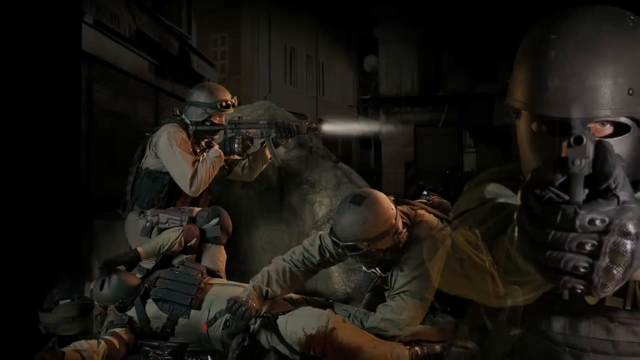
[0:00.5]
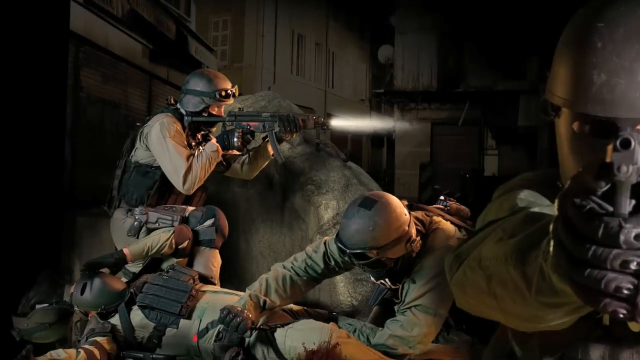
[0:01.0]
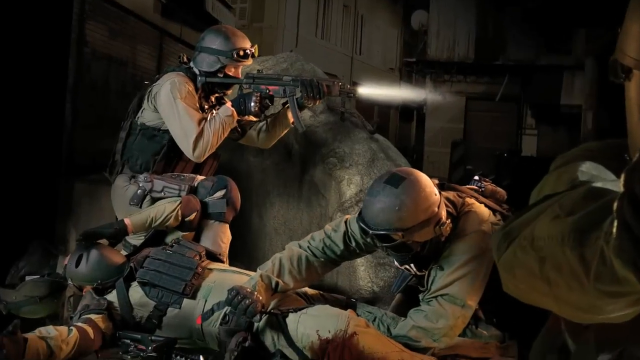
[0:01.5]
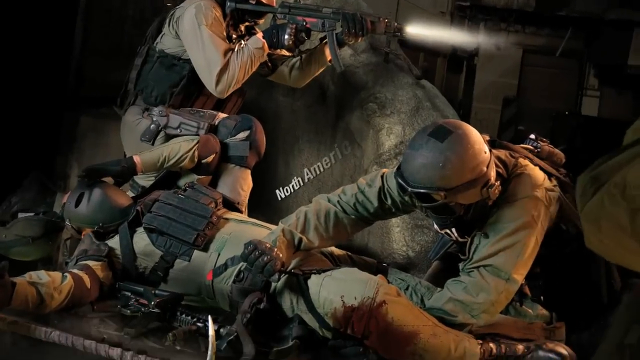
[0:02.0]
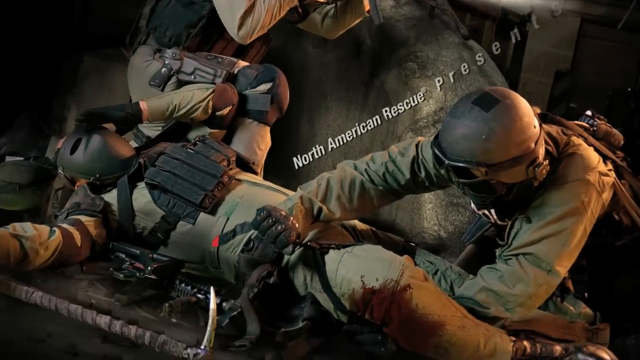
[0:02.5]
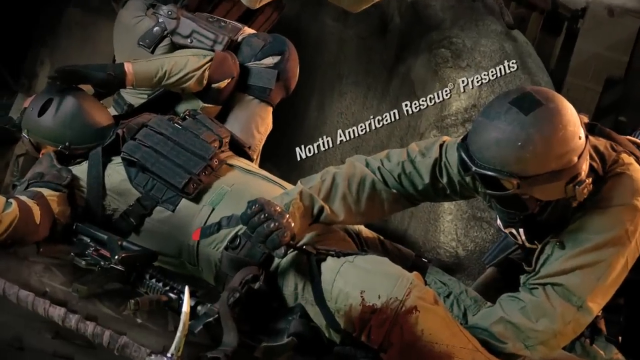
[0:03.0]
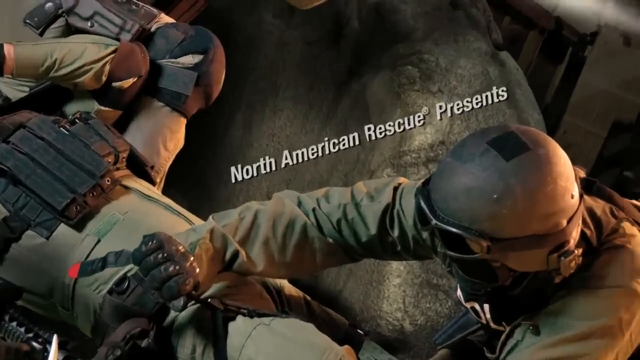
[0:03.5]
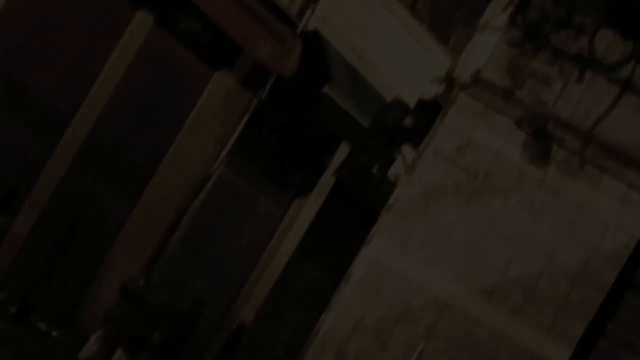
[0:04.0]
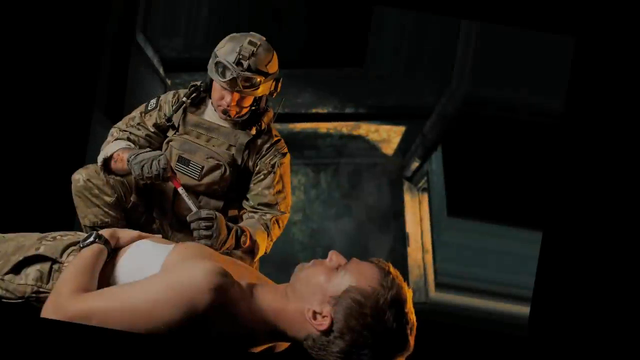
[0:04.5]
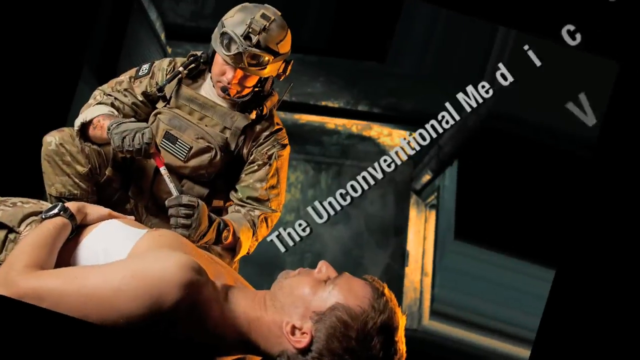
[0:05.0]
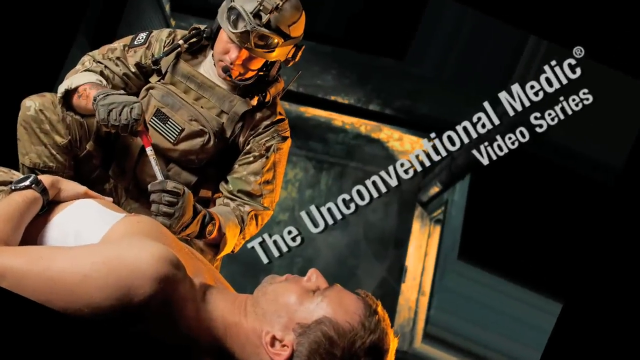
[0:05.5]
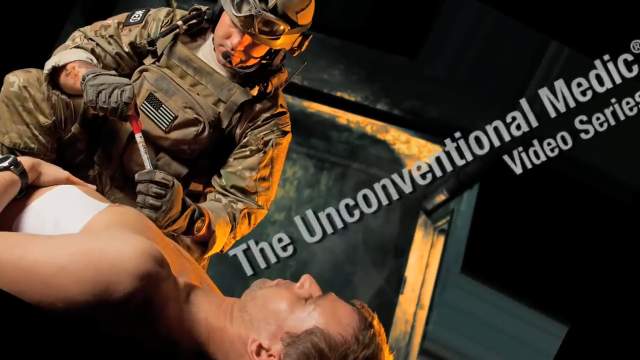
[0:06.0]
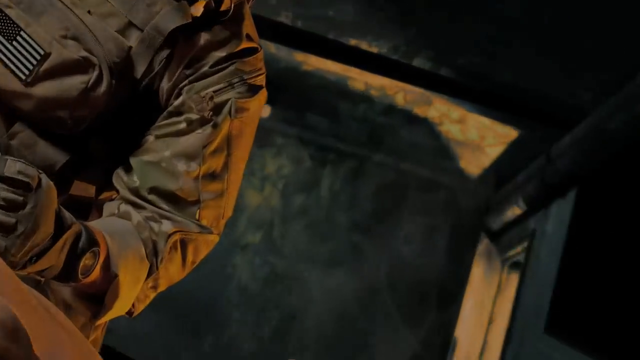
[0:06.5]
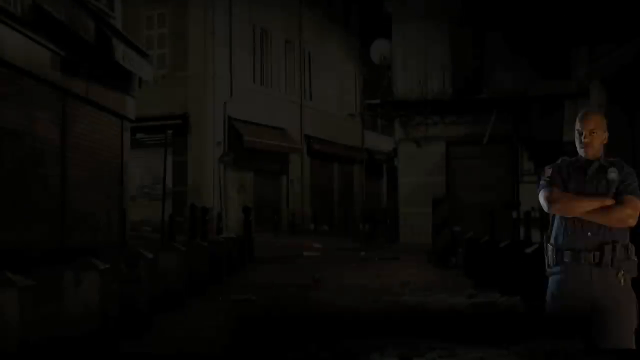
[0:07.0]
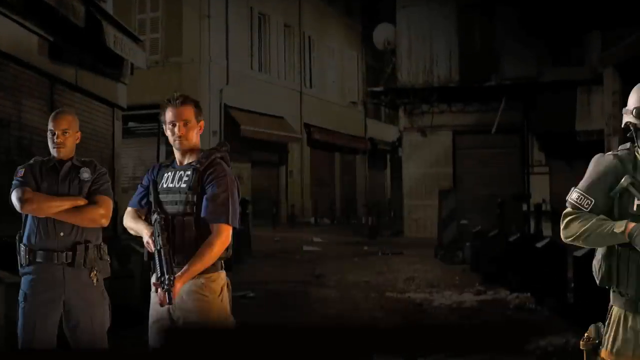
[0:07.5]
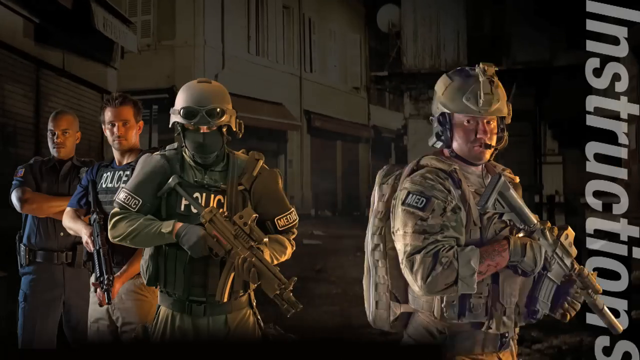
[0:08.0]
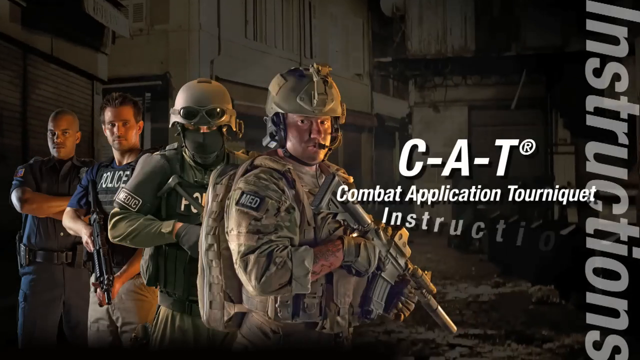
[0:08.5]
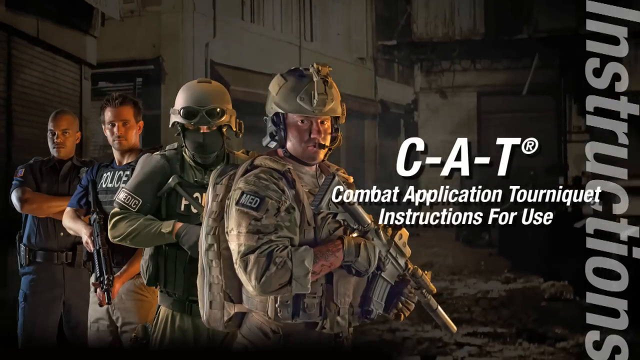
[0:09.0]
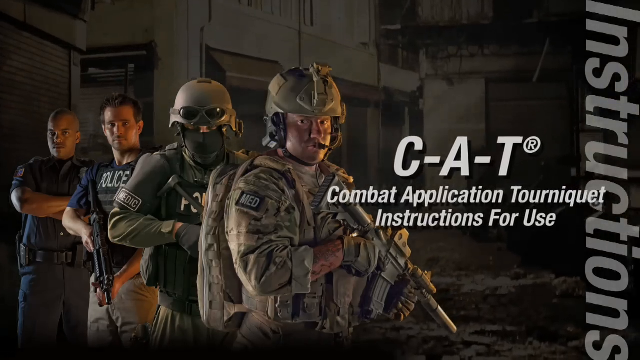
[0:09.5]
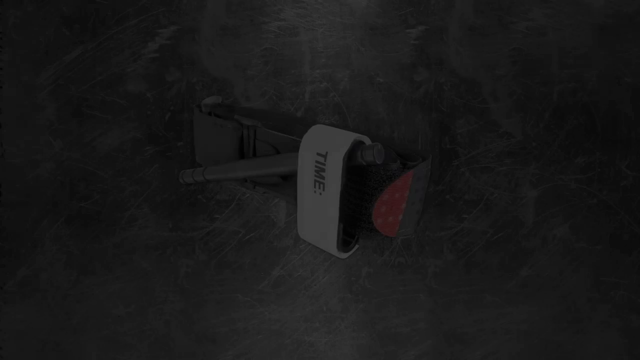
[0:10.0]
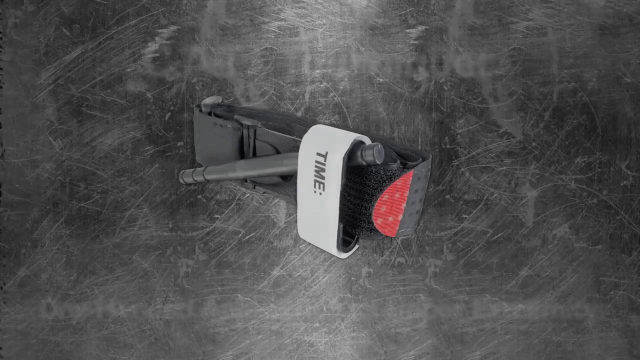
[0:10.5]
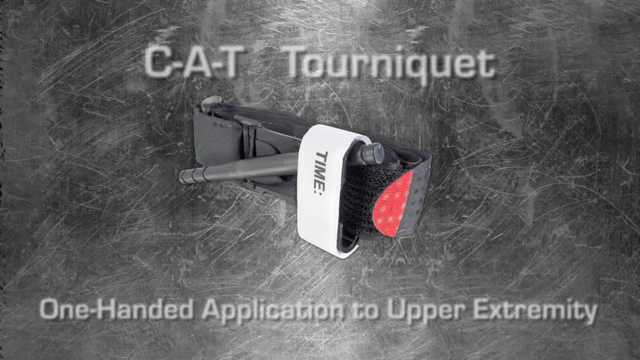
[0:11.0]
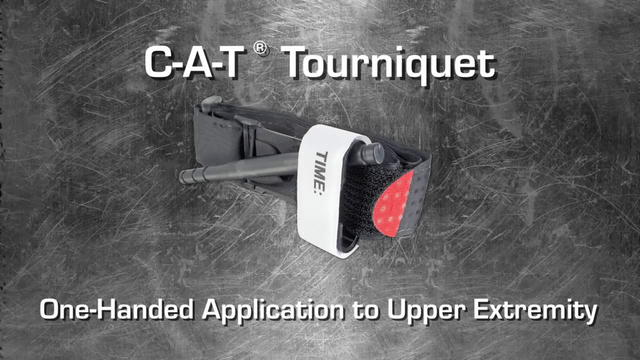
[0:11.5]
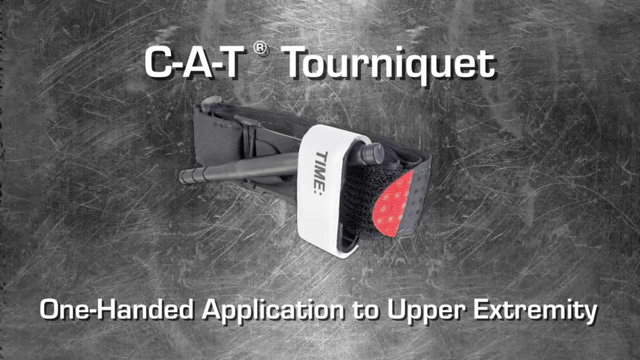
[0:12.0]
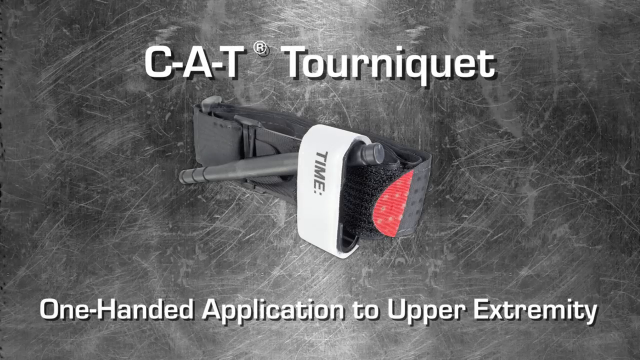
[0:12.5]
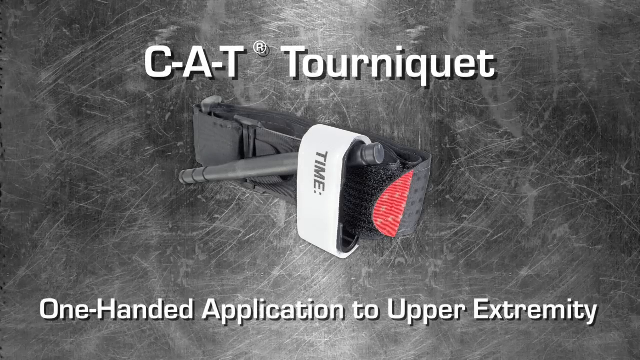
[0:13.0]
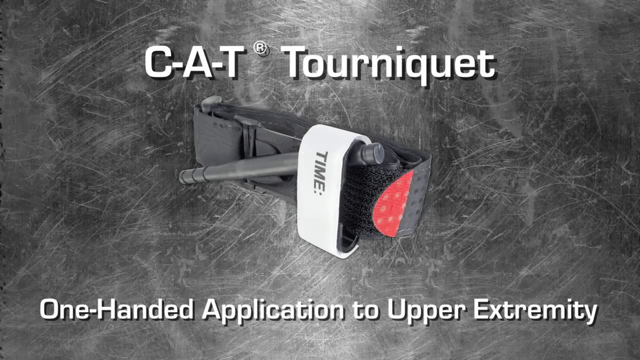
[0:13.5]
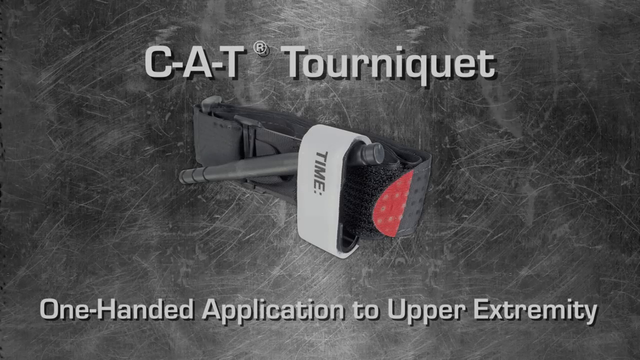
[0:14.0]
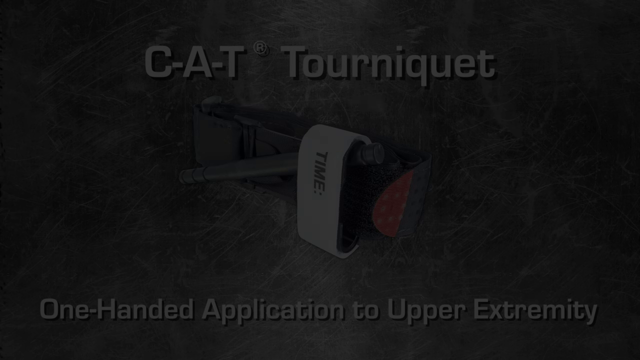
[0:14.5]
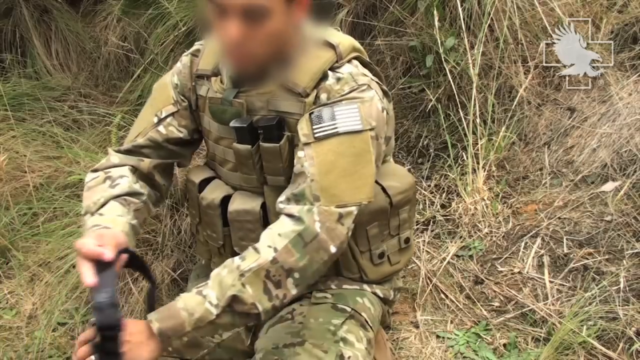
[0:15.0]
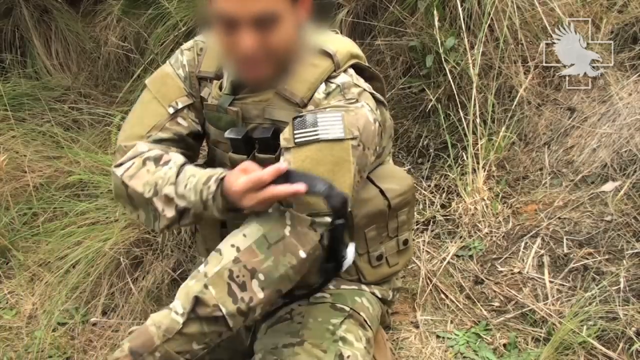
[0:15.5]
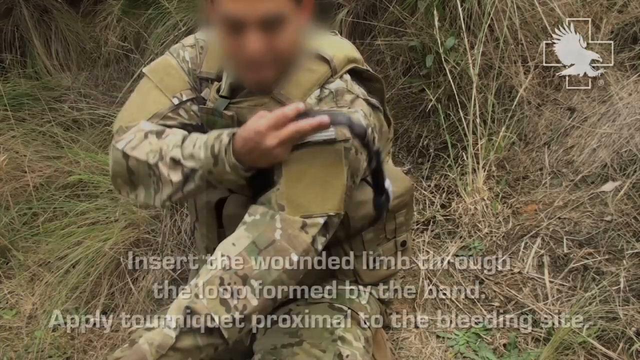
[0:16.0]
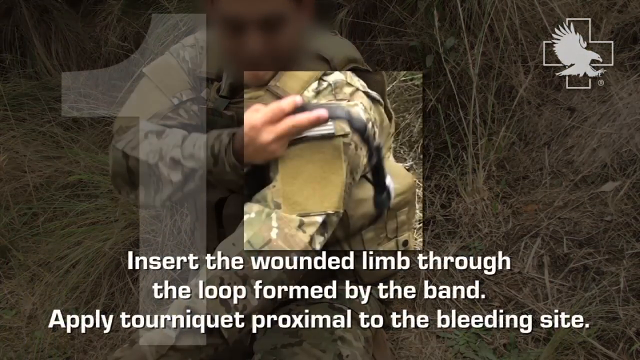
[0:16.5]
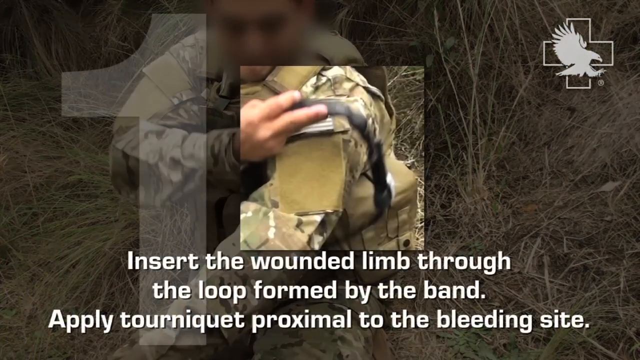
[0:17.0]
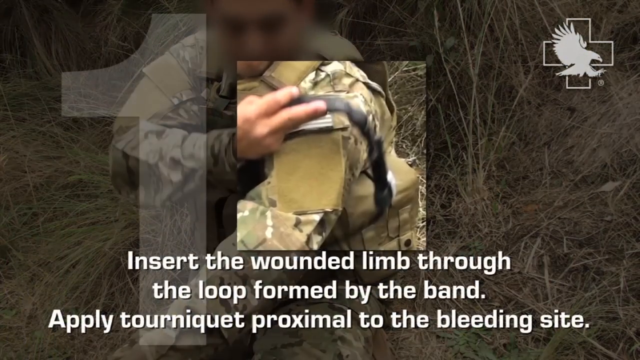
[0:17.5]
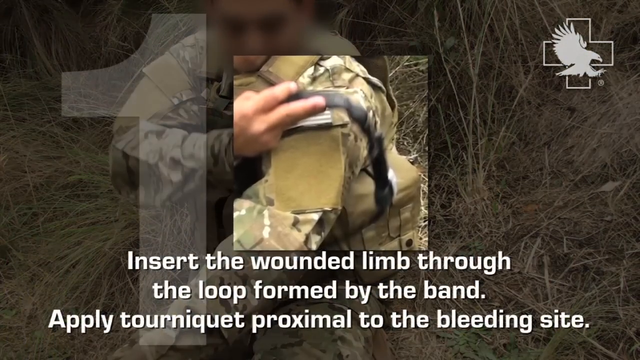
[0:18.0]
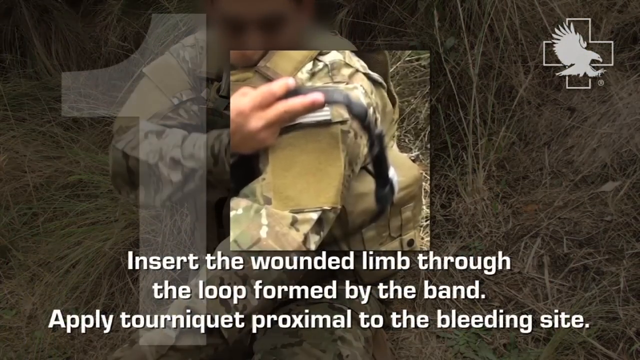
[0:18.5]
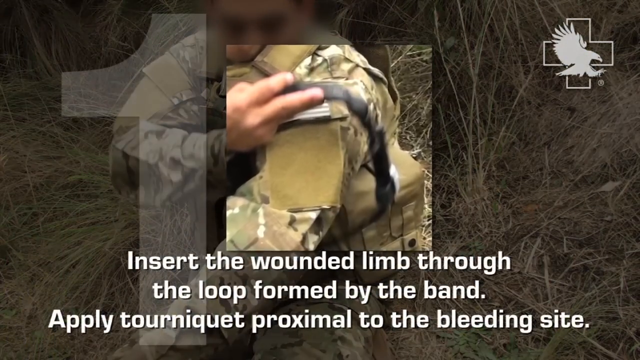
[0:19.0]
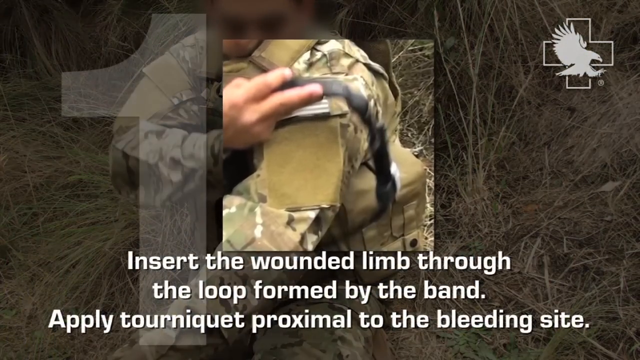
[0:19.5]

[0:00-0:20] What looks like a group of soldiers is on a battlefield; the scene looks almost like it was made in a video game, though it is perhaps just a graphic. Text flashes over it reading "North American Rescue presents". A soldier is then shown over a wounded person with the text "the unconventional medic video series". Next, a group of soldiers appears with some police officers in the background, and the text reads "the C-A-T tourniquet" and "one-handed application to upper extremity". This appears to be the intro to a demonstration of a one-handed tourniquet.